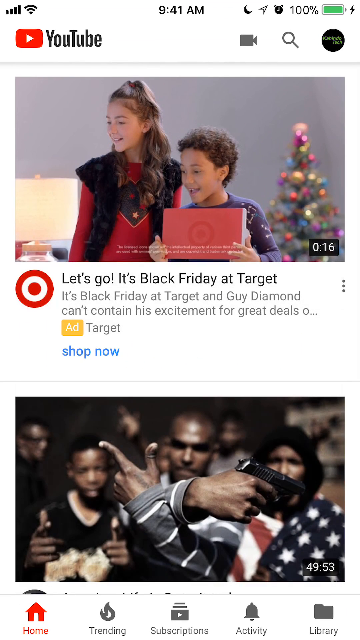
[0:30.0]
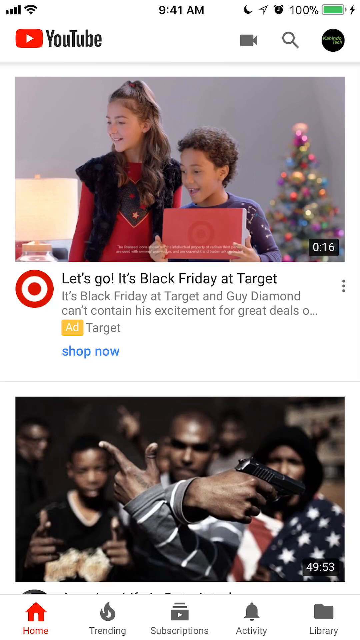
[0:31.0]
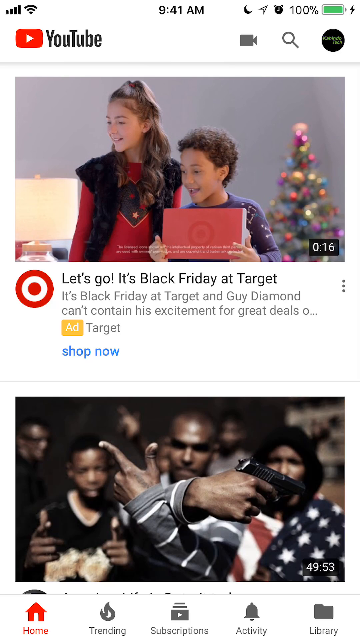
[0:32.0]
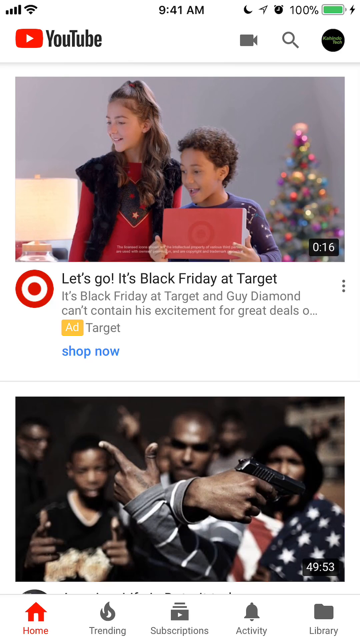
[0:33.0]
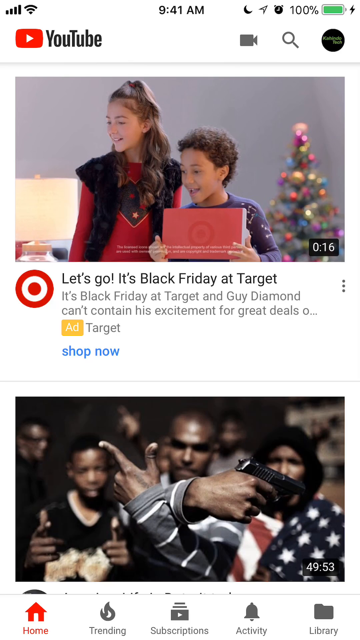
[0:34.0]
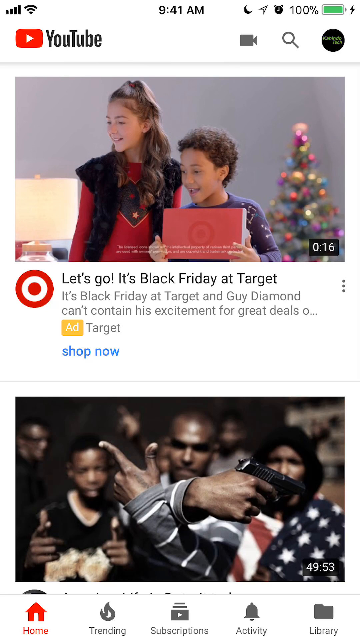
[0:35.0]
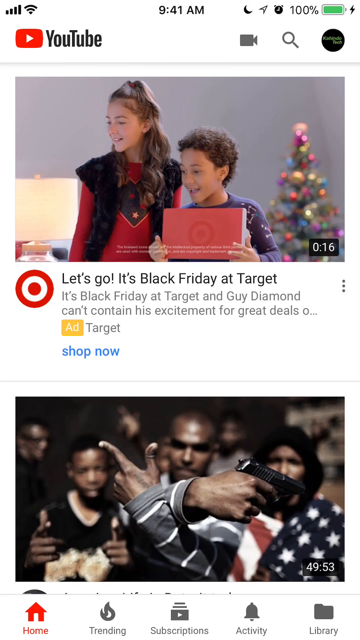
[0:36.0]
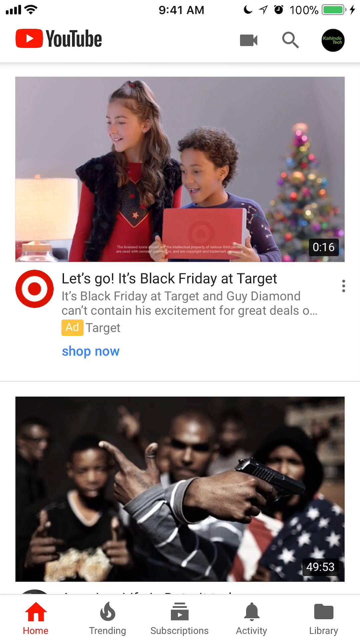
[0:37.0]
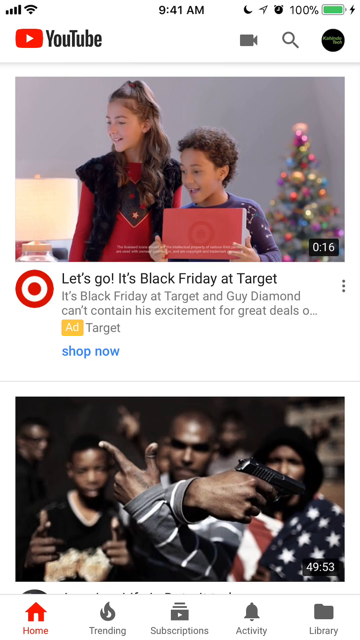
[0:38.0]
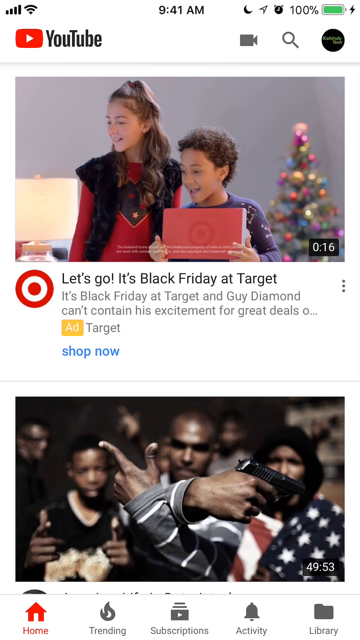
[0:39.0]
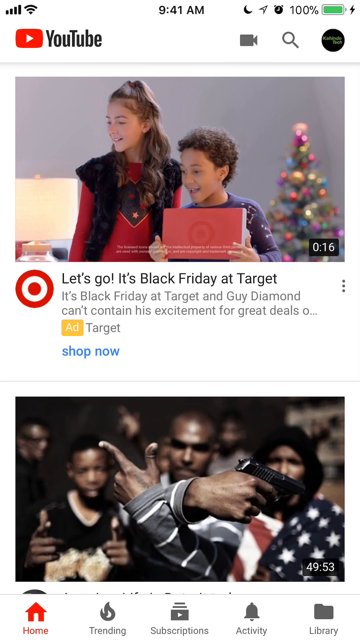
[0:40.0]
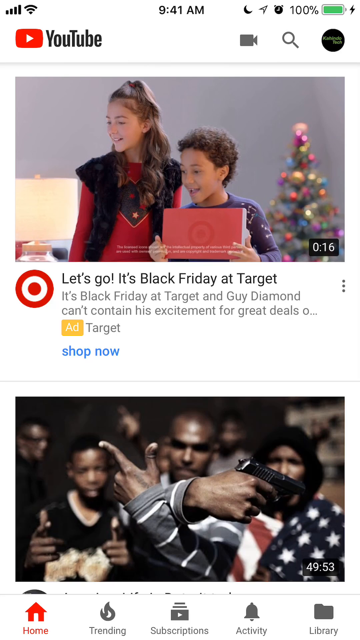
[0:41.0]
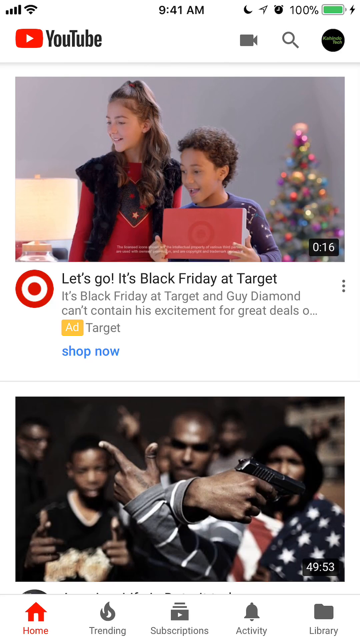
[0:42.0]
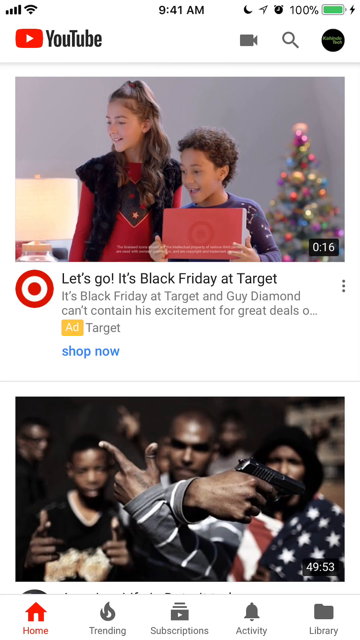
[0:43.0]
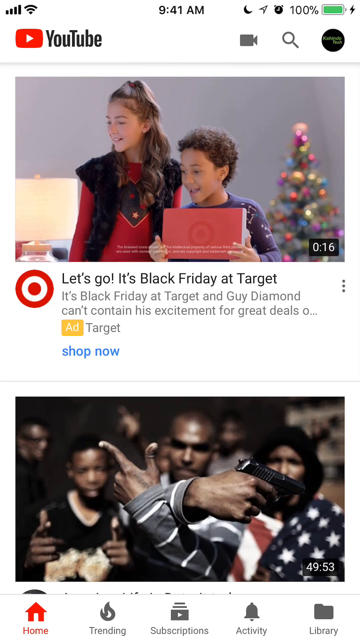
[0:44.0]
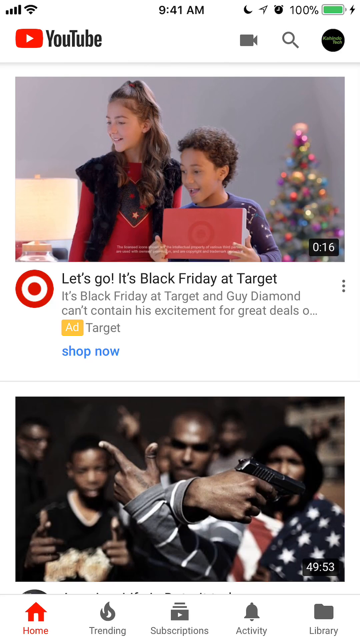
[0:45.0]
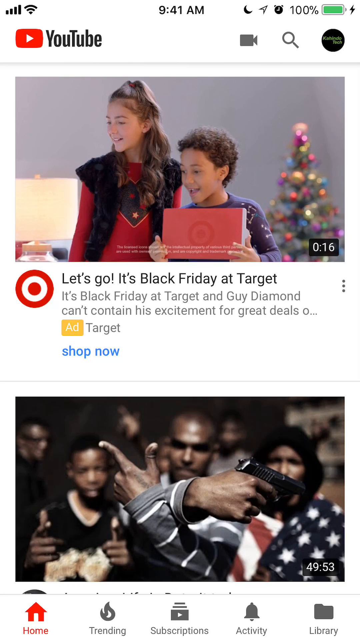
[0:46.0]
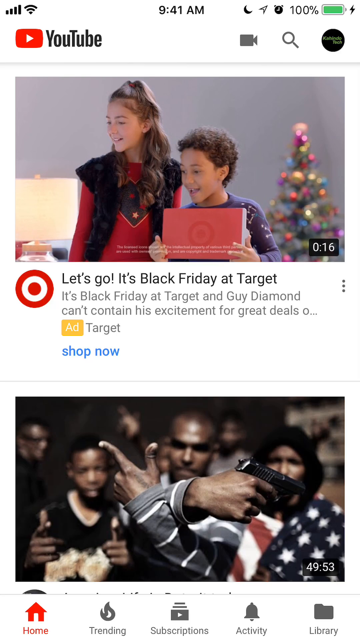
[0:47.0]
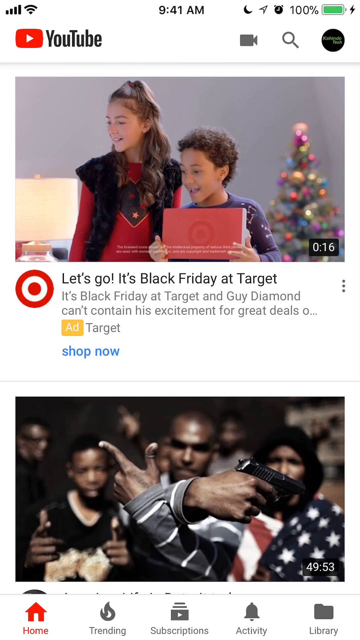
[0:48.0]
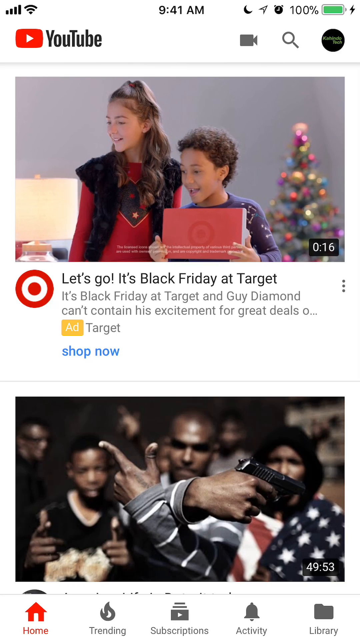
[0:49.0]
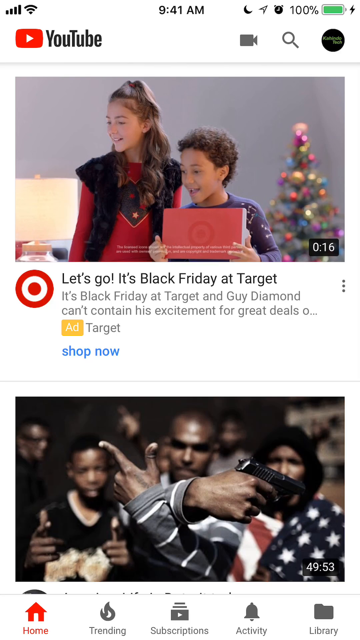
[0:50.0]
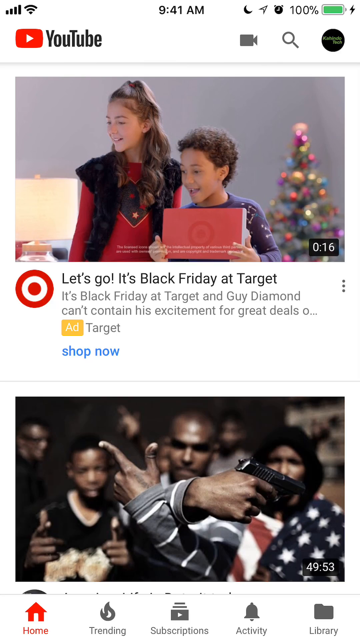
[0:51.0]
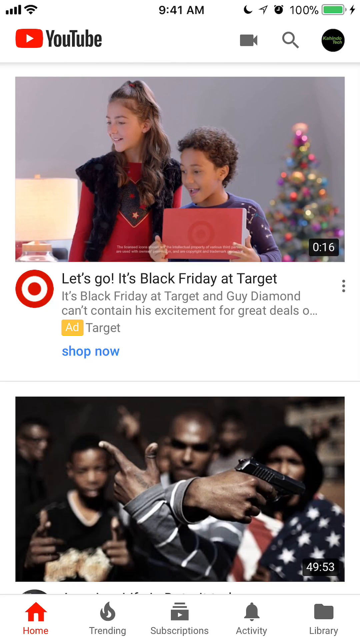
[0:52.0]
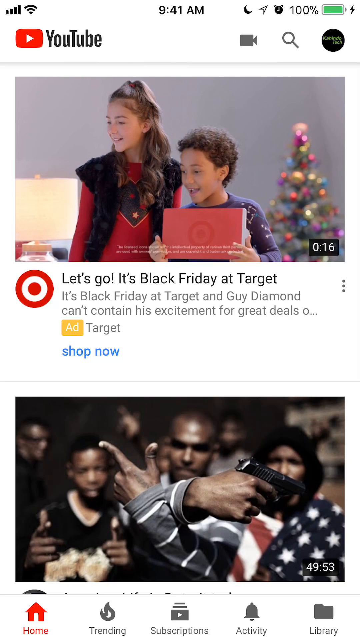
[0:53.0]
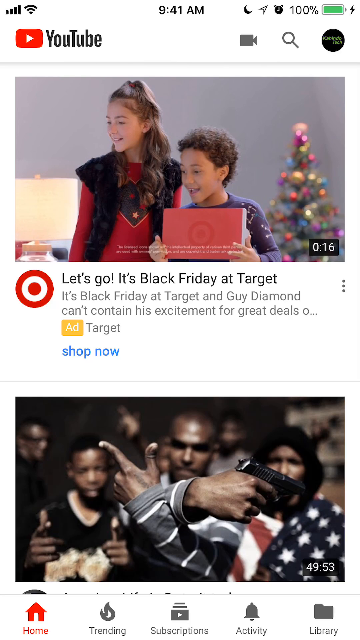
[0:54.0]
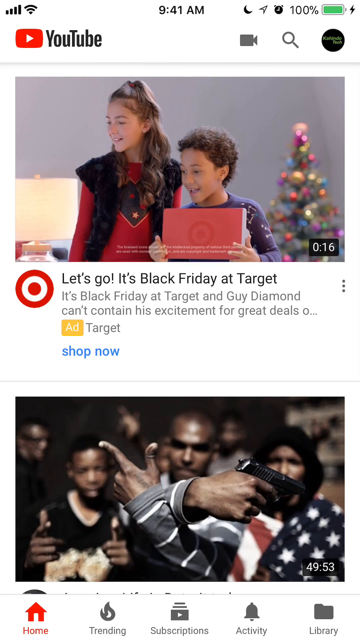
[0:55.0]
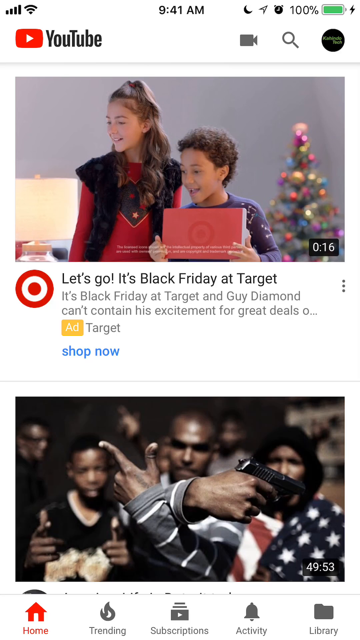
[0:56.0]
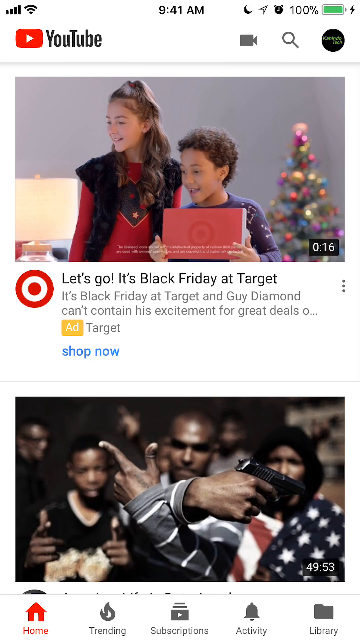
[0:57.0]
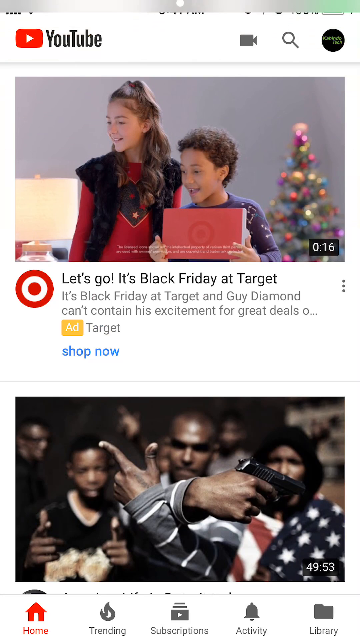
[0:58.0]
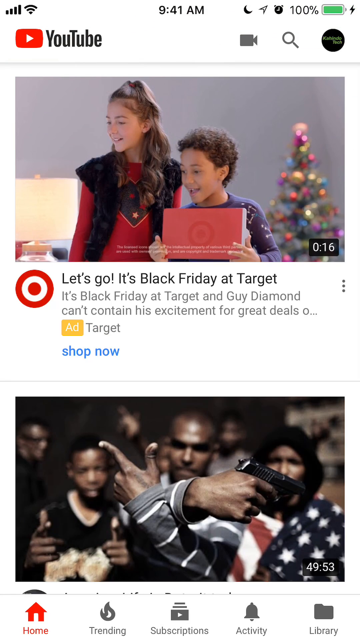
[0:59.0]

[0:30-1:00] A YouTube page is open in the YouTube app on the smartphone, with the YouTube logo in the upper left corner of the screen. In the top part of the screen is an advertisement for Target, 16 seconds long, that says "let's go. It's back. It's Black Friday at Target." Below that it says "It's Black Friday at Target. And Guy Diamond can't contain his excitement for great deals." Below the ad is a video ready to be played that looks like a rap video. The phone shows a 100 percent battery charge, the time 9:41 a.m., a cellular signal and a Wi-Fi signal. The YouTube page has a camera icon, a search button, and the user name, a black circle with some text in it that is too small to read.